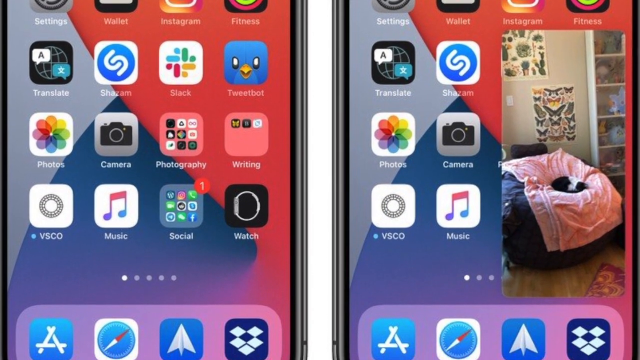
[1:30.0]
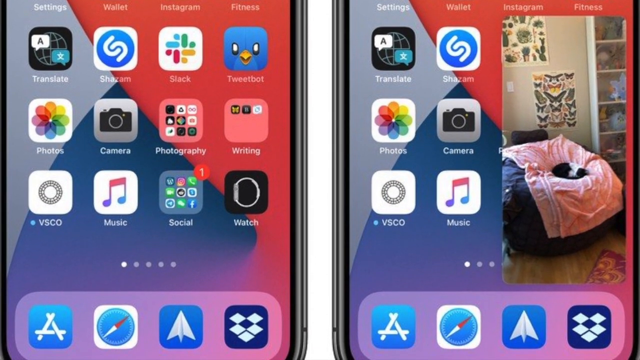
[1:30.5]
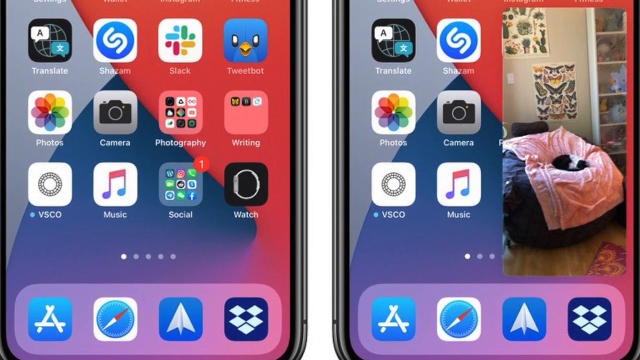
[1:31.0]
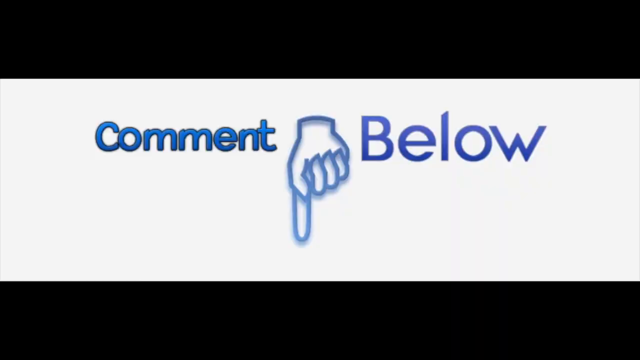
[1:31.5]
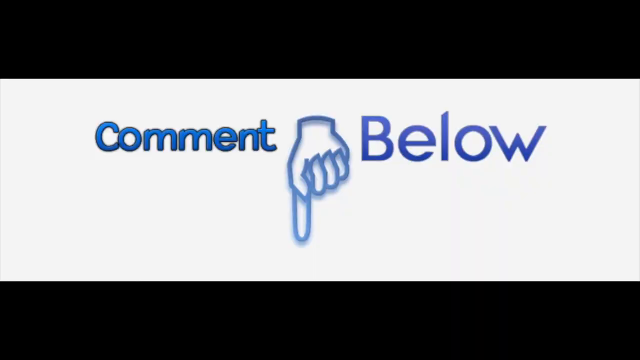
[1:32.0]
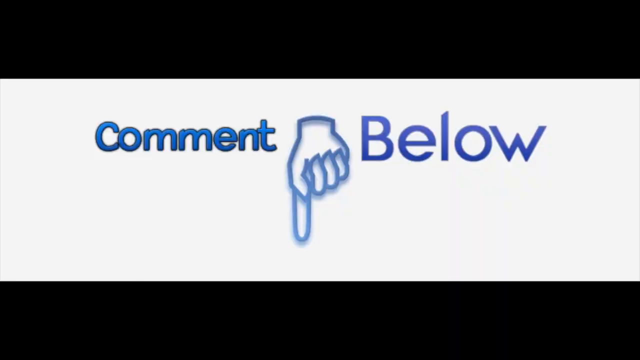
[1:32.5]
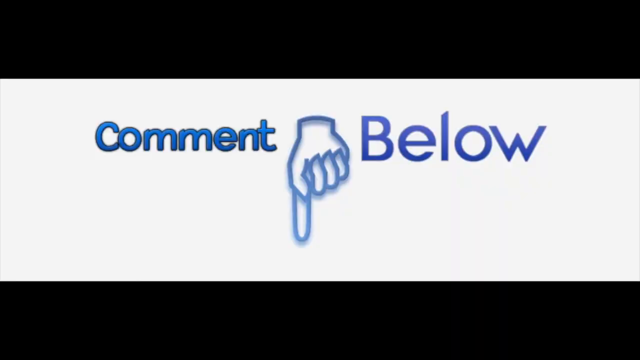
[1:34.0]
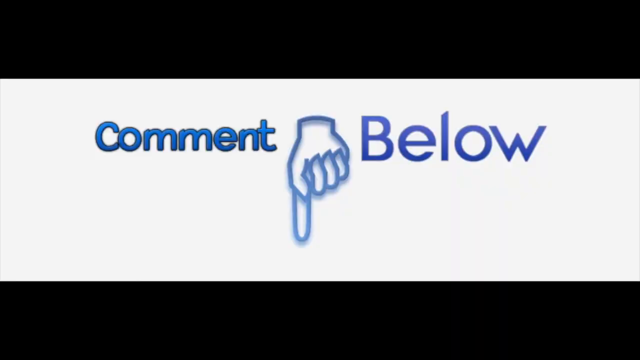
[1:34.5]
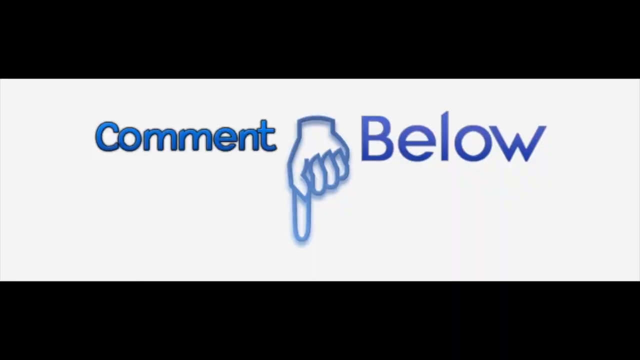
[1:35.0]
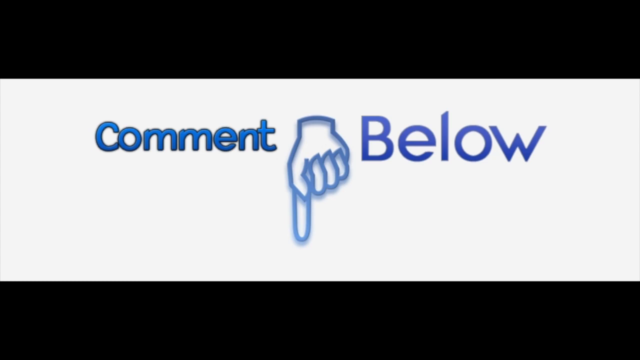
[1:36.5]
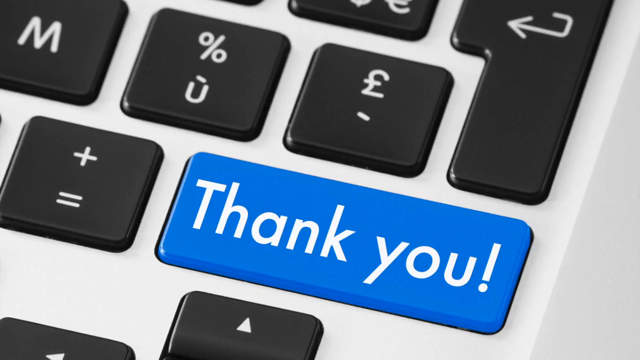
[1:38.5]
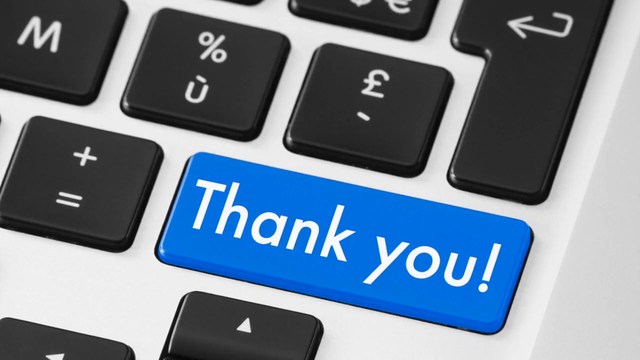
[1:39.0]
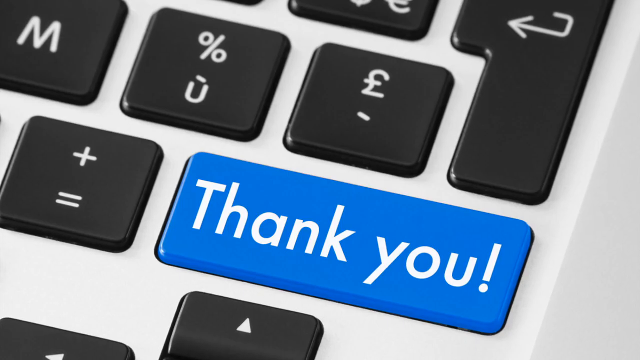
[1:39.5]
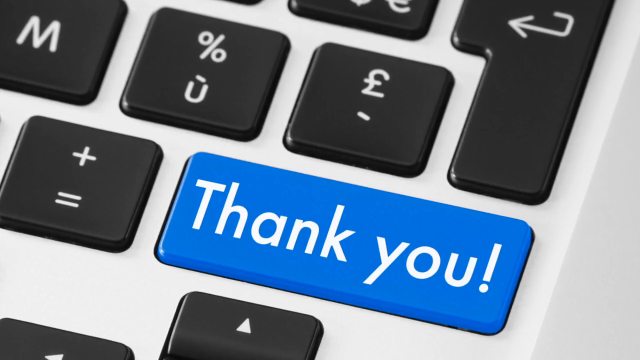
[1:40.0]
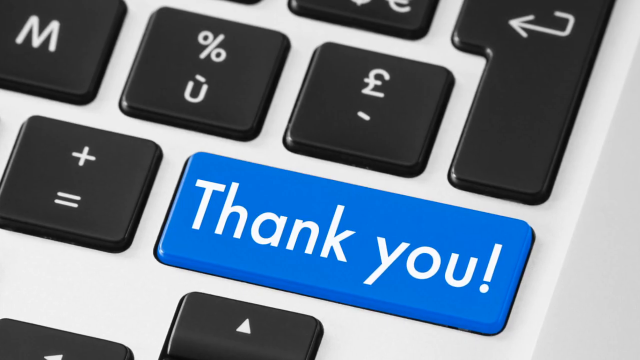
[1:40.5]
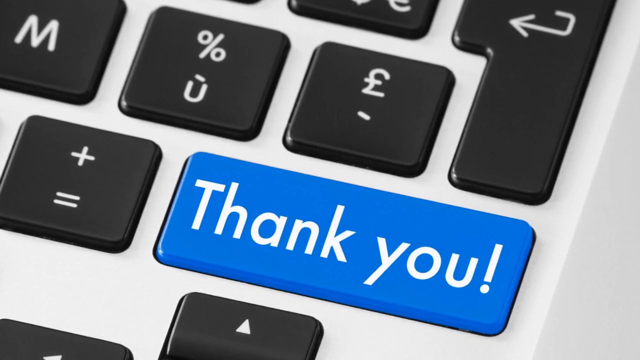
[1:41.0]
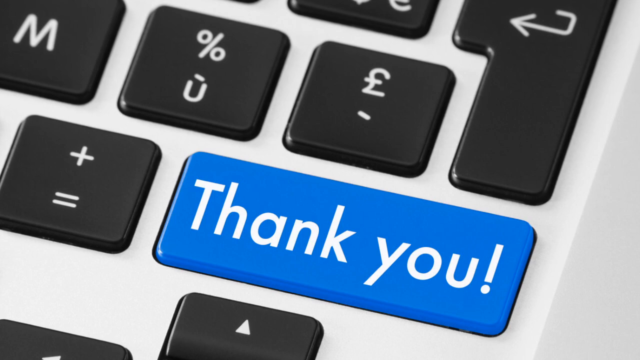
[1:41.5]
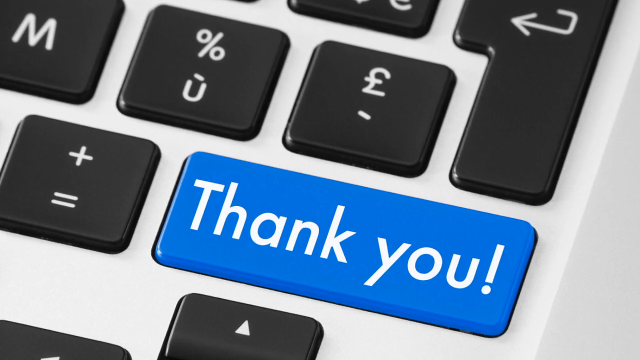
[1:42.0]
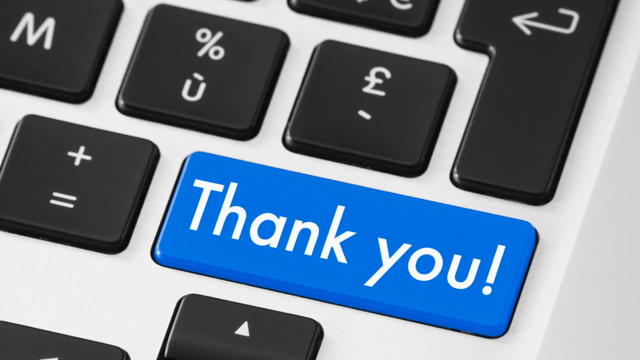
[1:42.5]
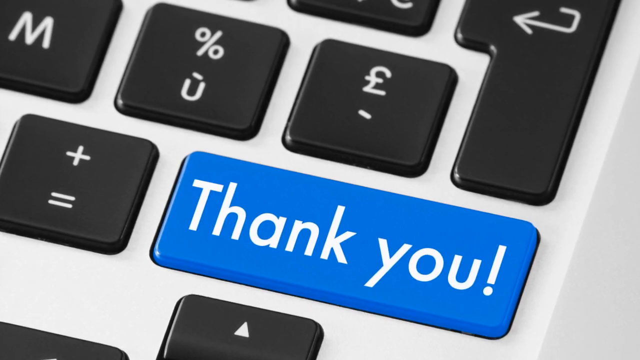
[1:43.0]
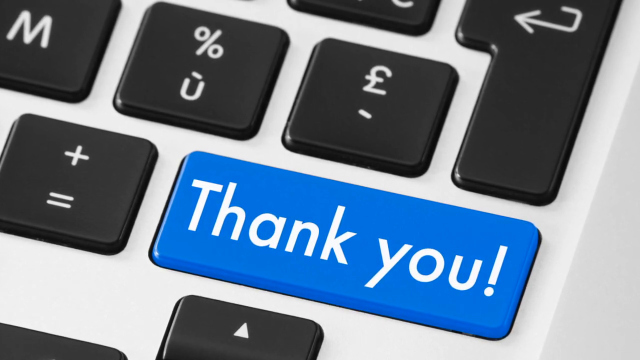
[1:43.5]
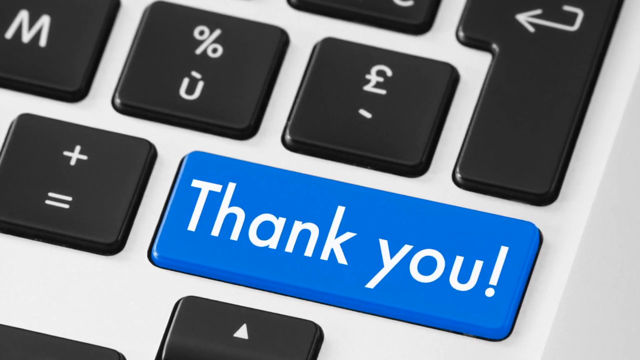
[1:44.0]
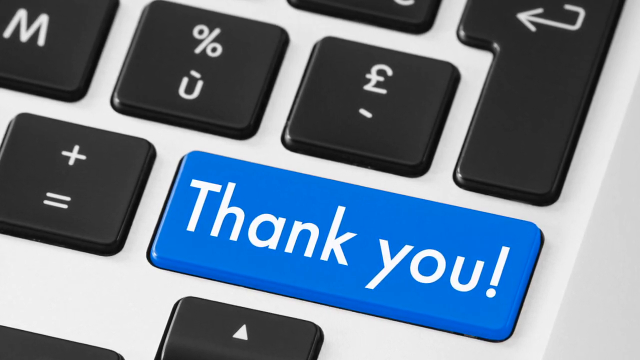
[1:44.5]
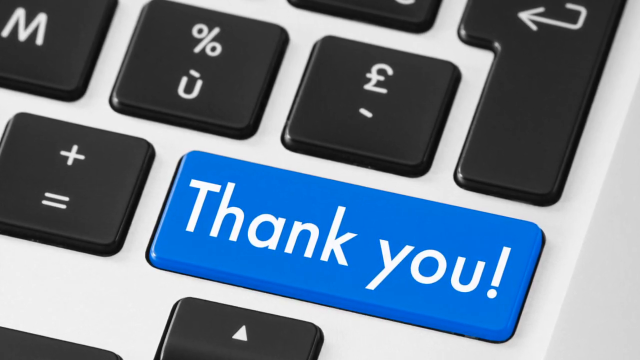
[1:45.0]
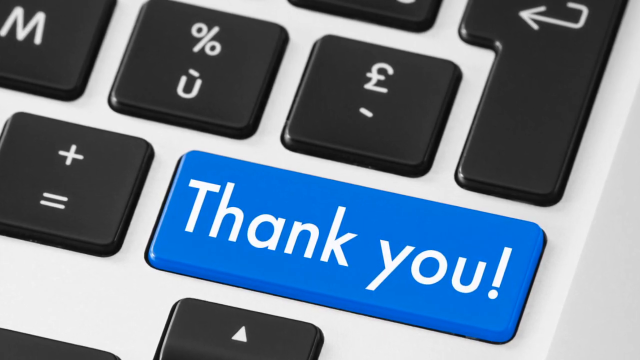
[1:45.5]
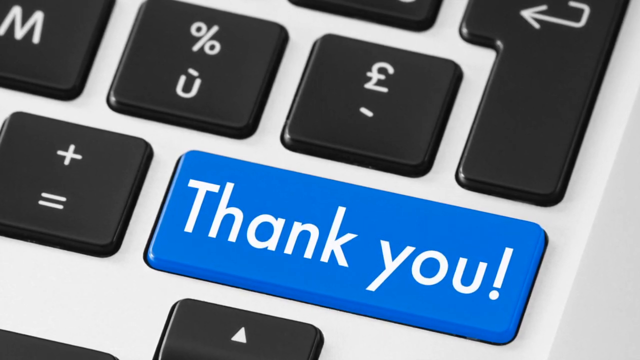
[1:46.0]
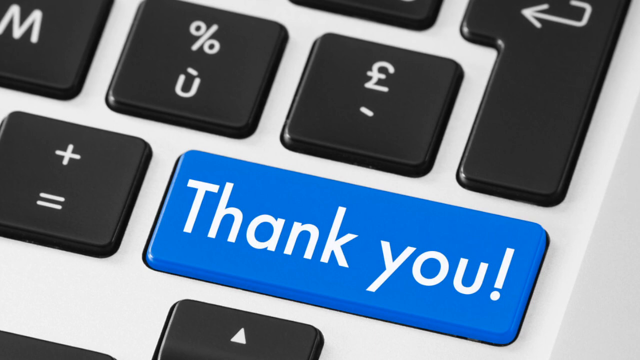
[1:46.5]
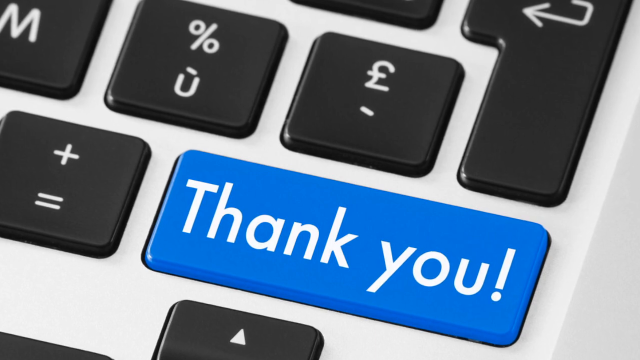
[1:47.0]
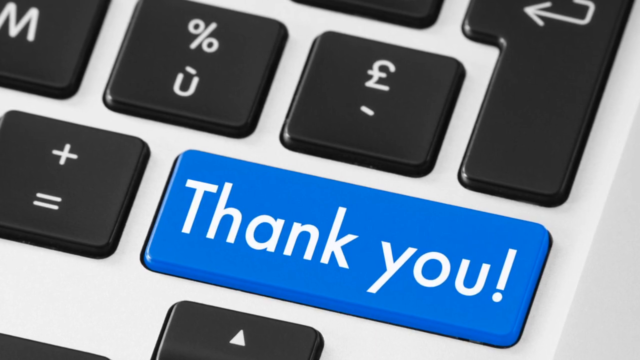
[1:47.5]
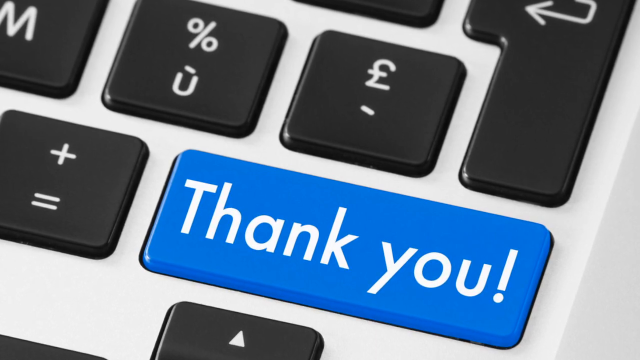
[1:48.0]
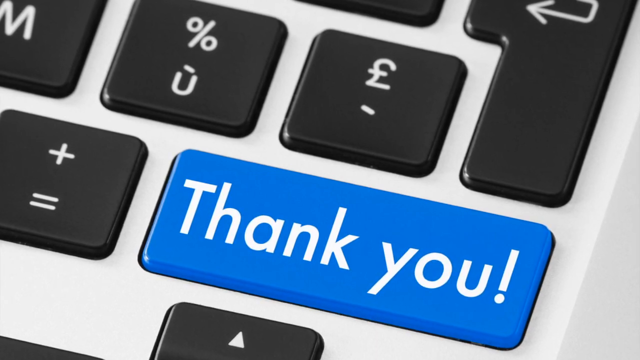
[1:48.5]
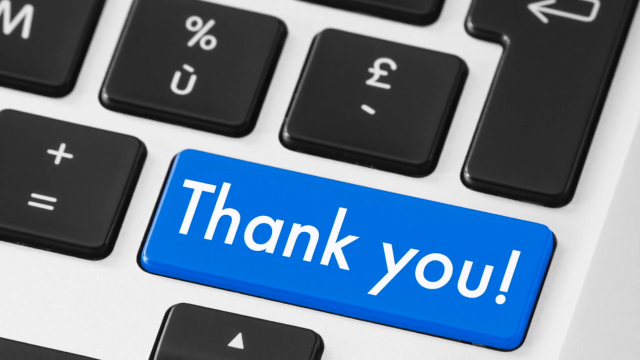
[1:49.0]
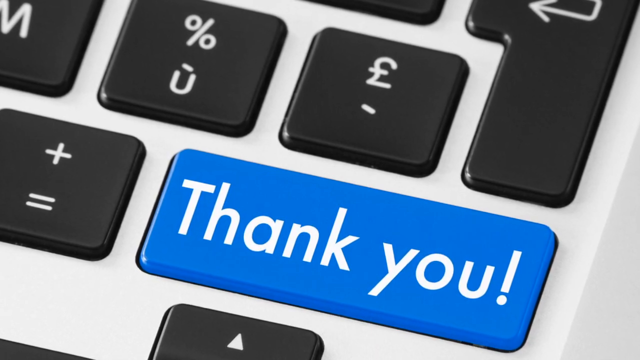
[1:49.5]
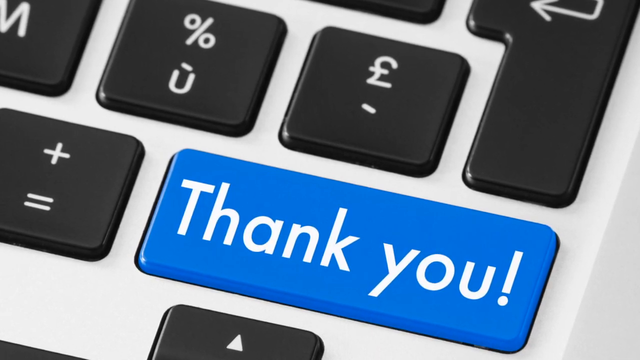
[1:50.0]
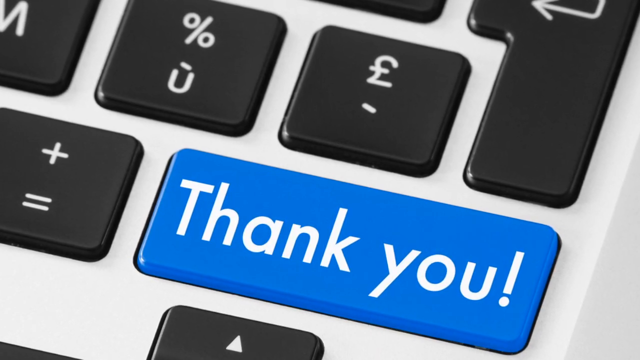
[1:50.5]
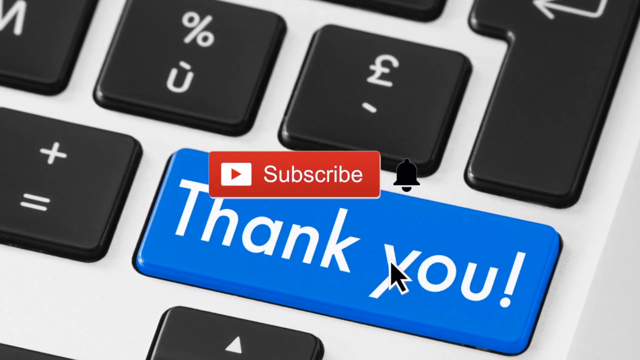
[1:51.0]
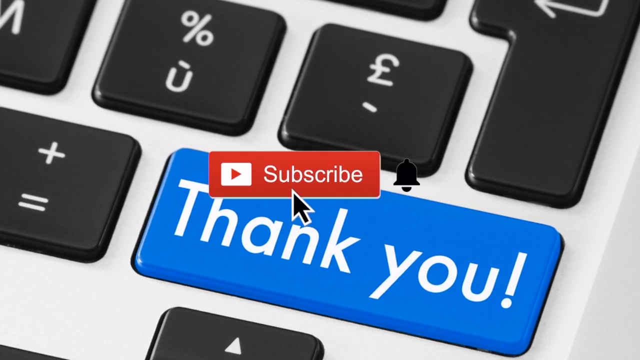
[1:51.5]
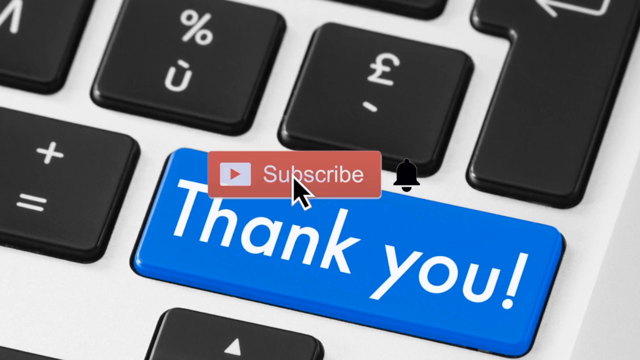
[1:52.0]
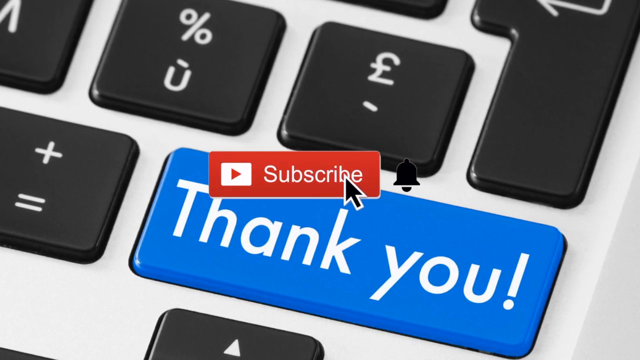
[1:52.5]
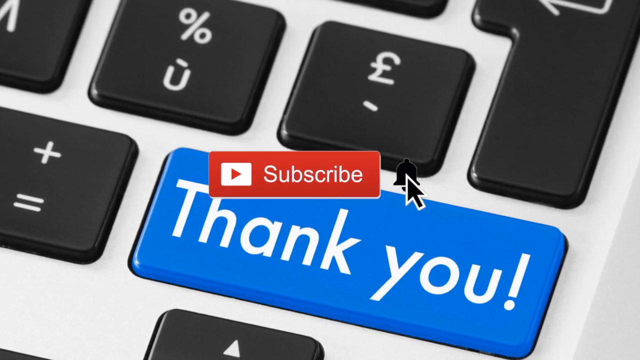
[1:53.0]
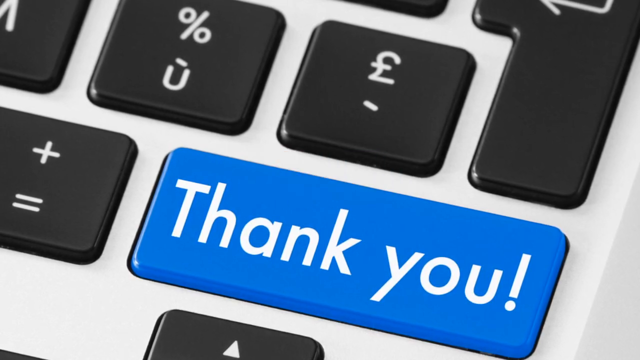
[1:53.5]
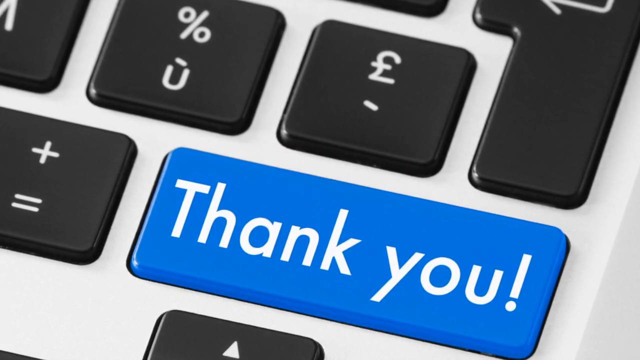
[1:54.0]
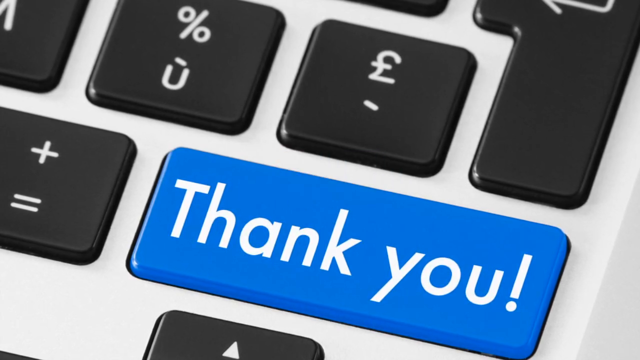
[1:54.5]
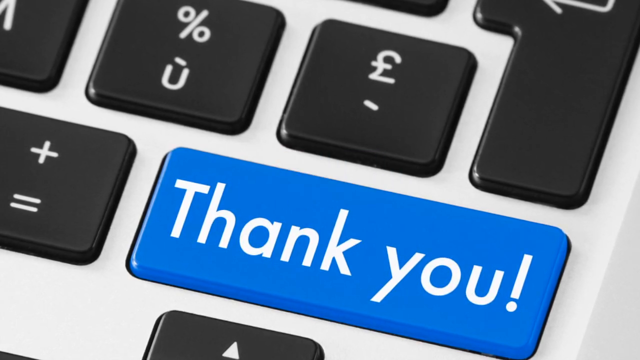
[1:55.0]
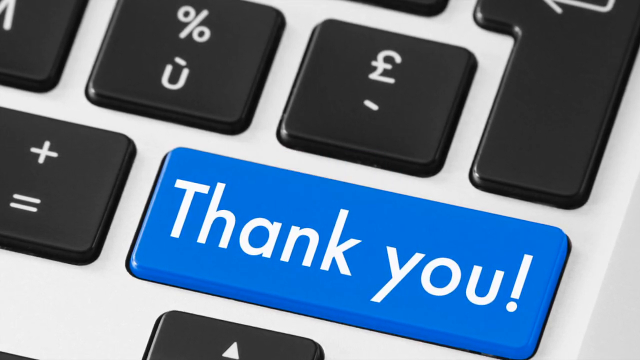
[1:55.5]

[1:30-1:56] The camera slowly pans down continuously to the bottom of the screen, then the view switches to a screen with two black bars at the top and bottom and a white bar in the middle. On the white bar, the words "comment below" appear in a blue font, with a blue finger pointing downwards in the center of the screen; "comment" is to the left of the finger and "below" to the right. The screen then switches to a picture of a keyboard zoomed in on a button on its right side, a blue button that says "thank you". The camera slowly zooms in on the thank you button. Near the end, a subscribe button and a notification bell pop up in the middle of the screen, and the mouse comes up and clicks on the subscribe button and the bell. It disappears.